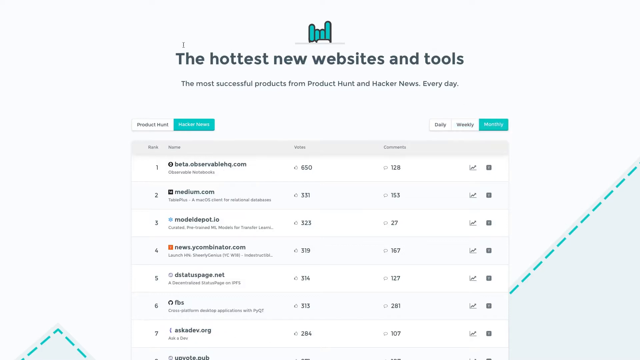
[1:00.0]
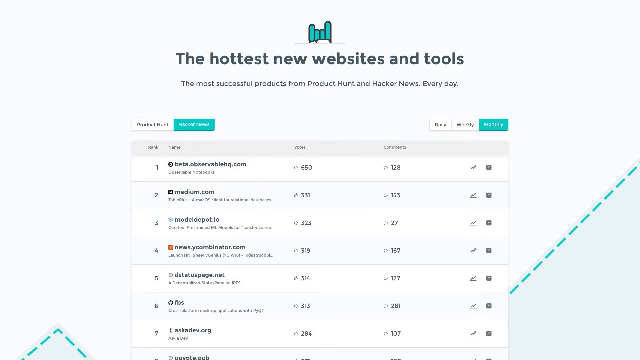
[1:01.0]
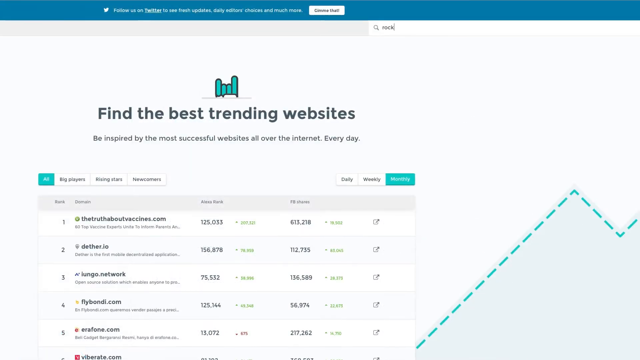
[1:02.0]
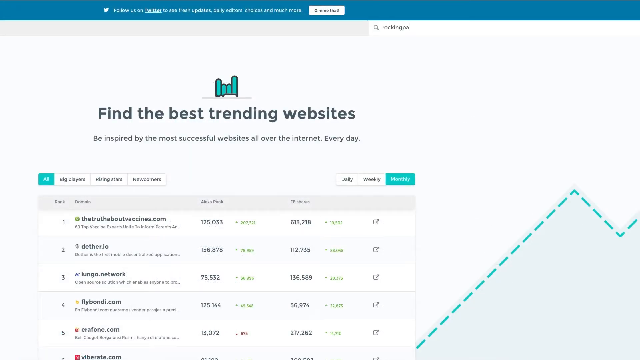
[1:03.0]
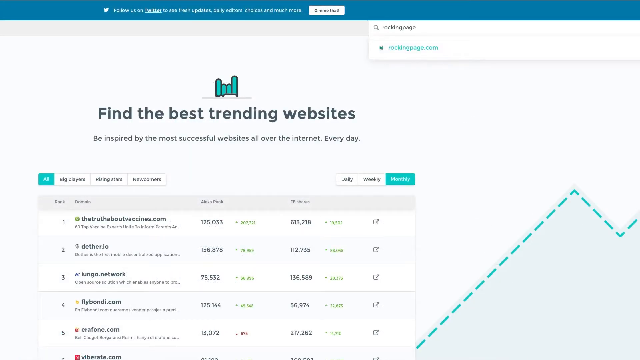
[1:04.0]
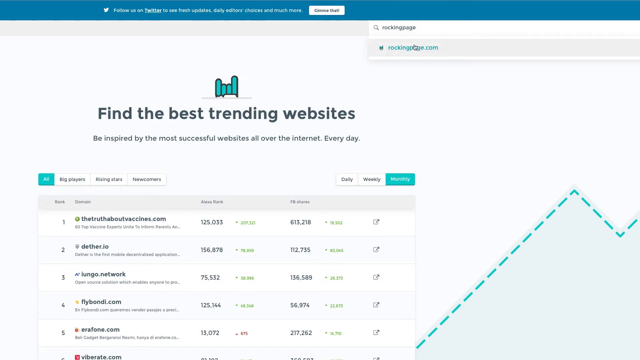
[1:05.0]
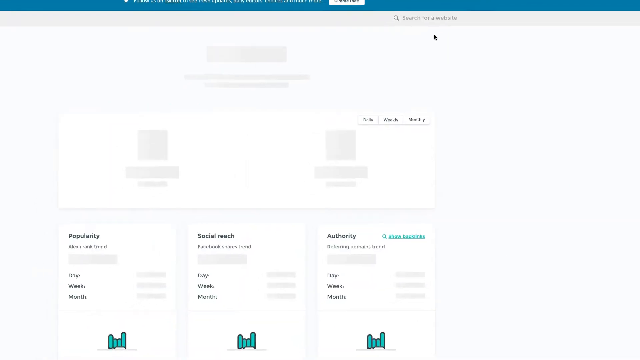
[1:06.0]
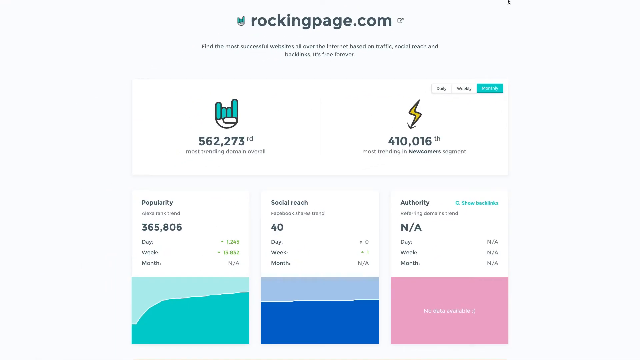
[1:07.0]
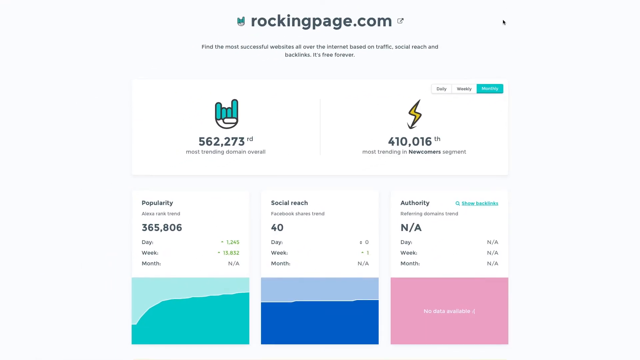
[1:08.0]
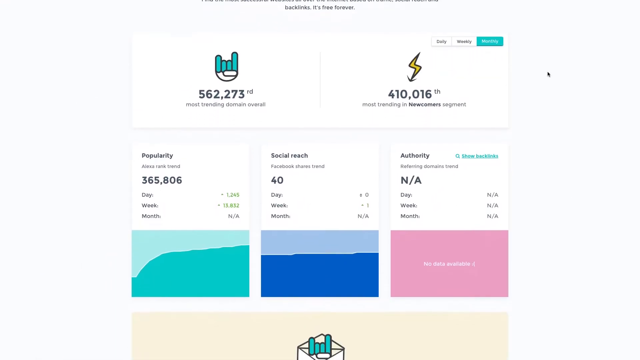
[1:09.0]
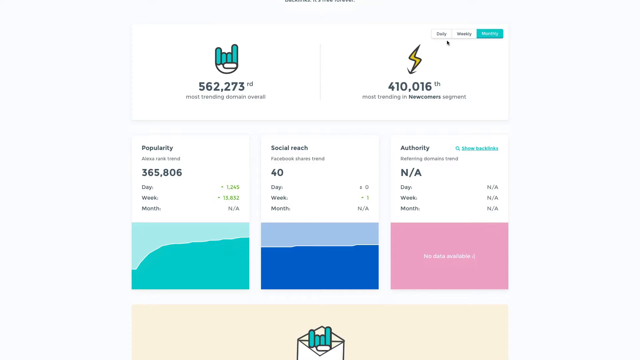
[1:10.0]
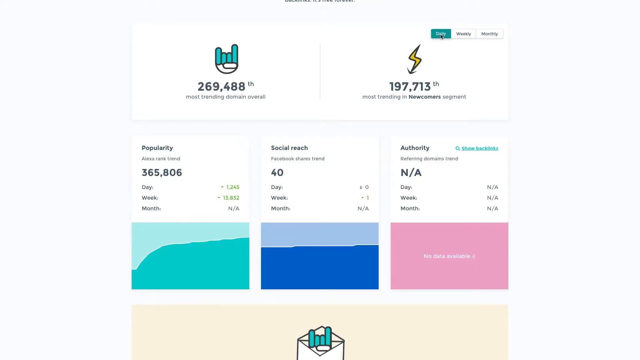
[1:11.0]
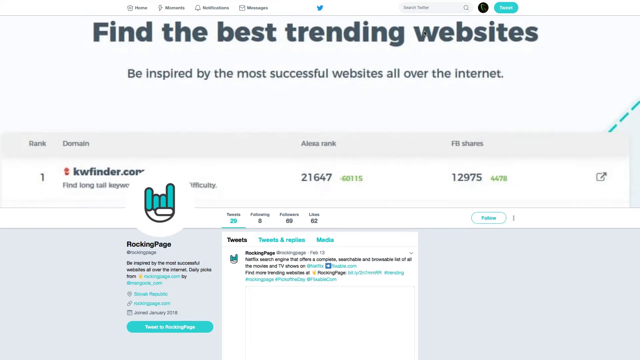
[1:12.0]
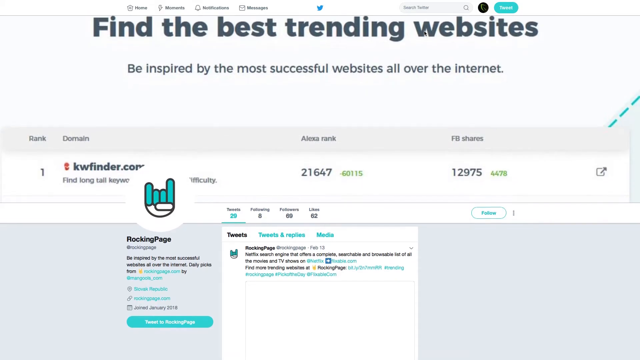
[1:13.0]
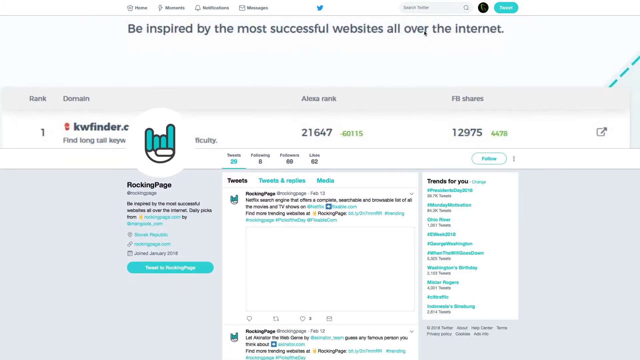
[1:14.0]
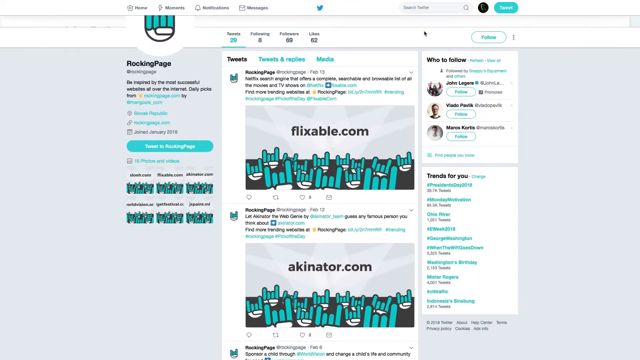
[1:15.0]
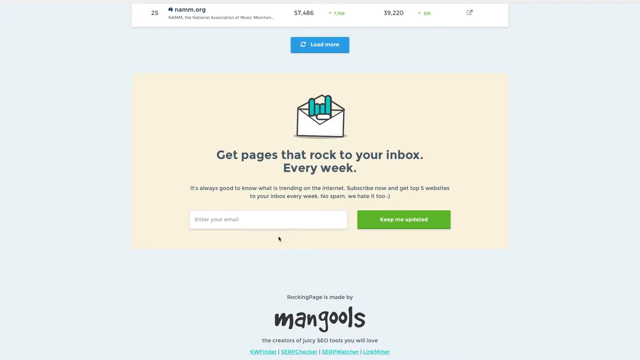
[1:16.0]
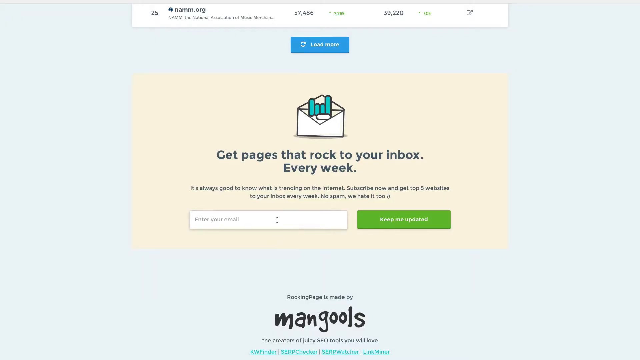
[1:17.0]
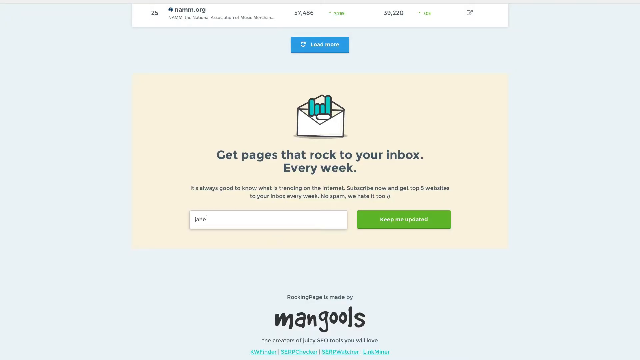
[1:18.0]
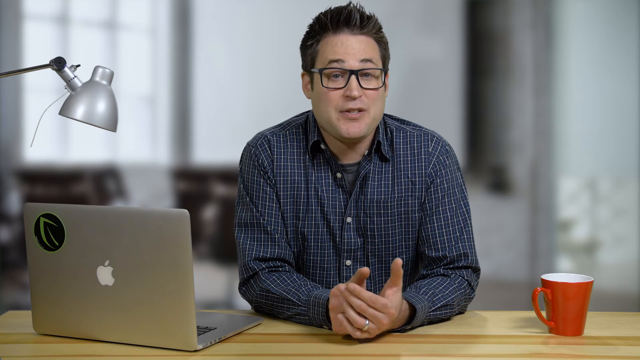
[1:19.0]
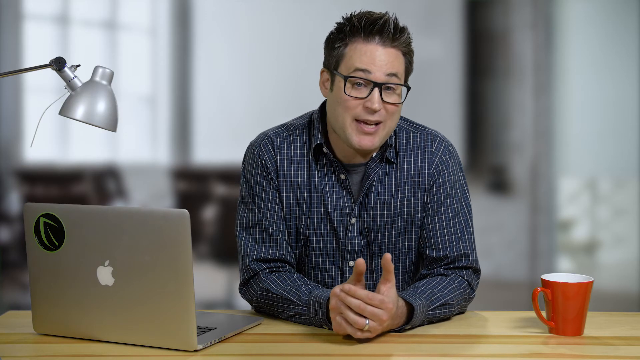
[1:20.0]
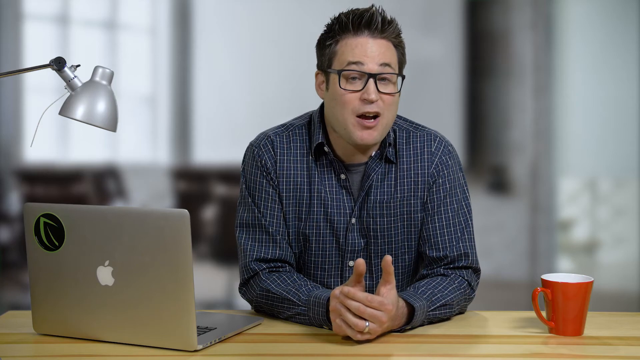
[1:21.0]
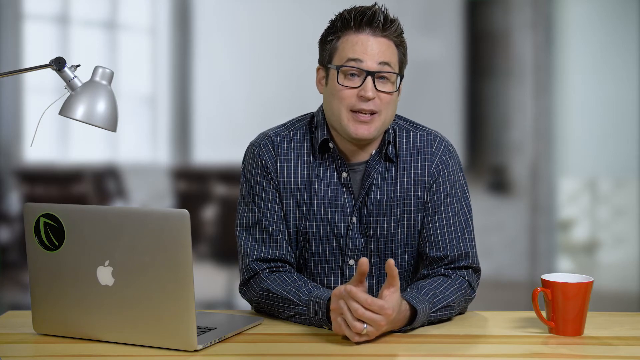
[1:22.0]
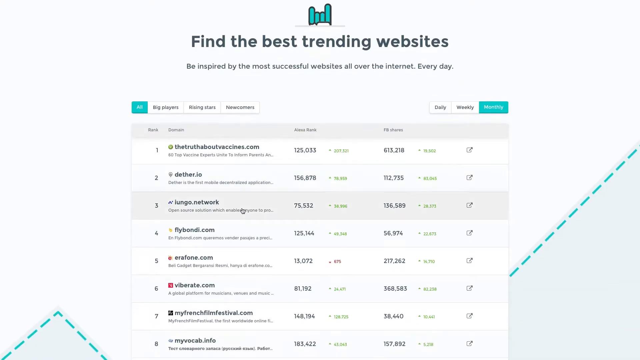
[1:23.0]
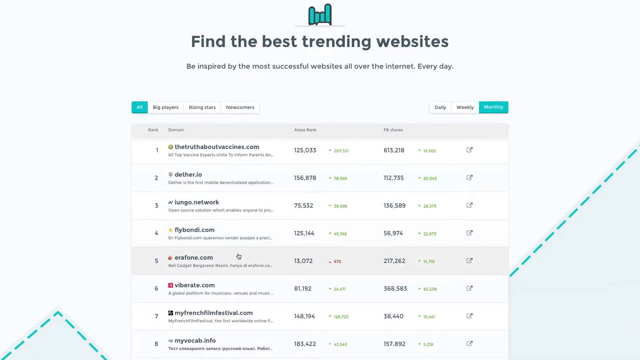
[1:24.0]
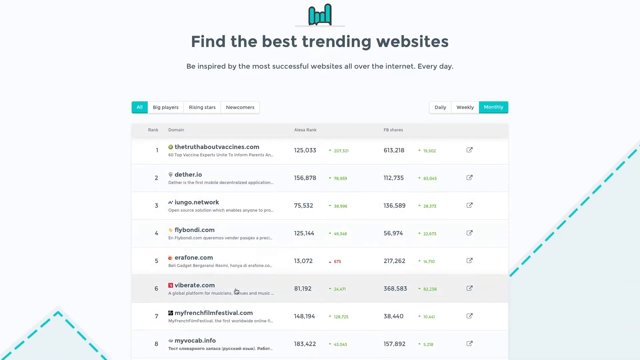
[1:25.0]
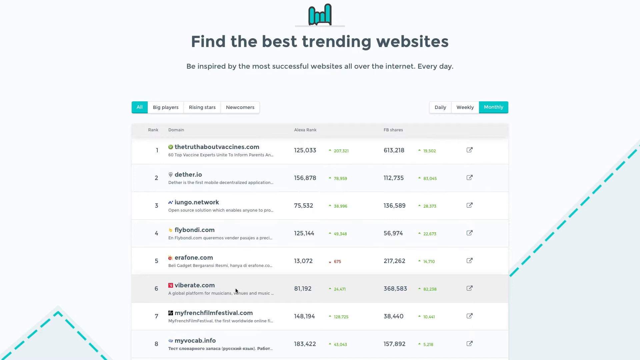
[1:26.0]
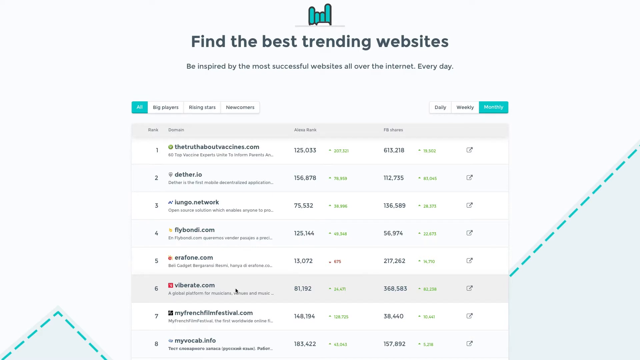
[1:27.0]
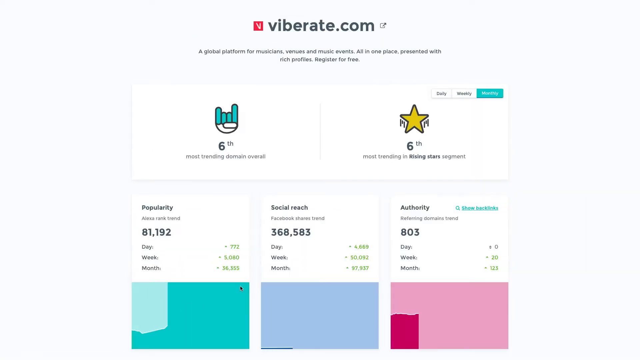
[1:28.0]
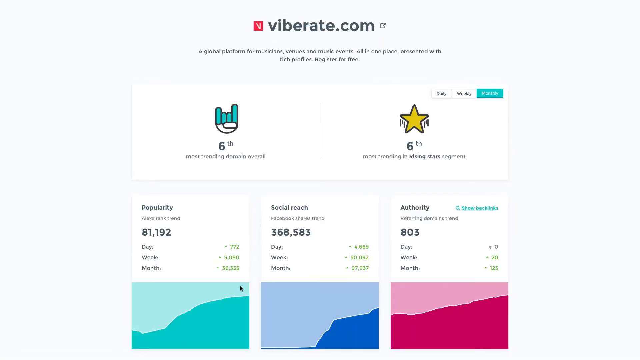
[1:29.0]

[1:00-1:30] On the sleek site, the categories of sites are shown, this time with weekly, monthly and daily views. The site goes to the top of the rocking page URL, or the home page of the site, where daily, weekly and monthly statistics about a site are displayed. A figure for how much the site is trending overall in the world shows 500,000, and the most trending newcomer segment shows 400,000, with logos. The site's popularity, social reach and authority are shown, all with social trends, including Facebook trends, popularity and growth for daily, weekly and monthly periods, as well as overall growth for the site as a whole. Charts show up-and-down trends. A promotion on their Twitter says it is the most trending website on the internet. Facebook shares and the Alexa rank of certain sites are visible, as is their Twitter social page with advertisements and other sites. A user submits an email address, apparently to receive weekly updates on news about the site and other sites. Finally, the video returns to the man talking in the home office setting.